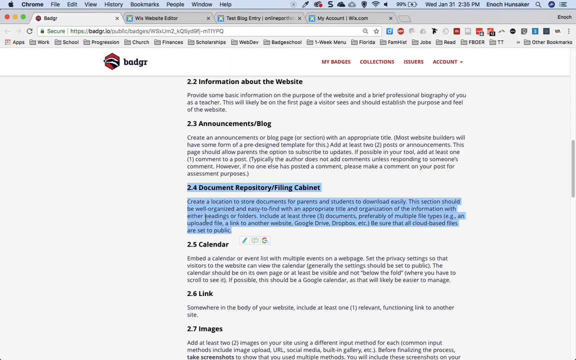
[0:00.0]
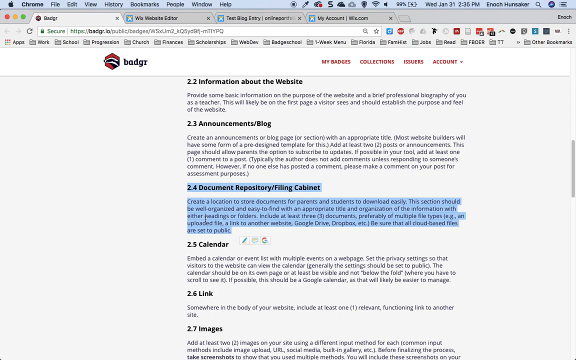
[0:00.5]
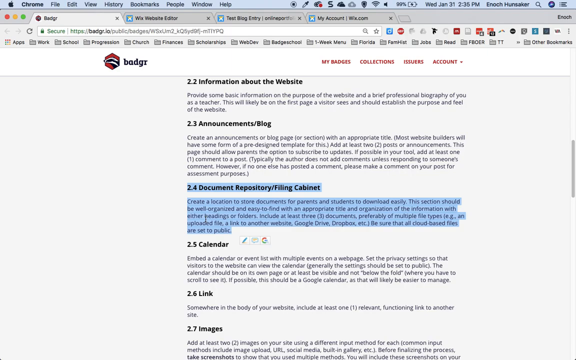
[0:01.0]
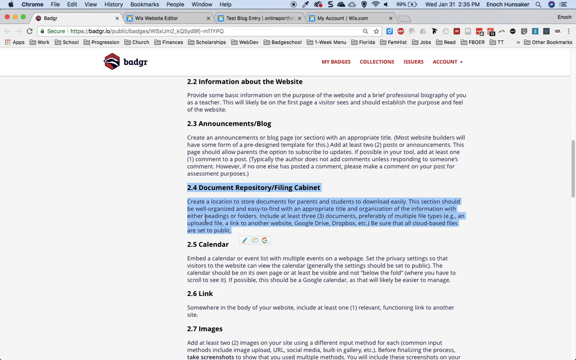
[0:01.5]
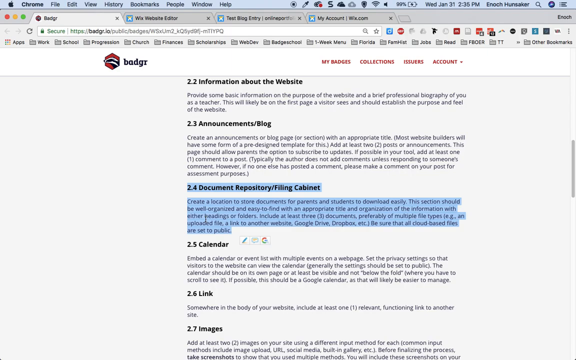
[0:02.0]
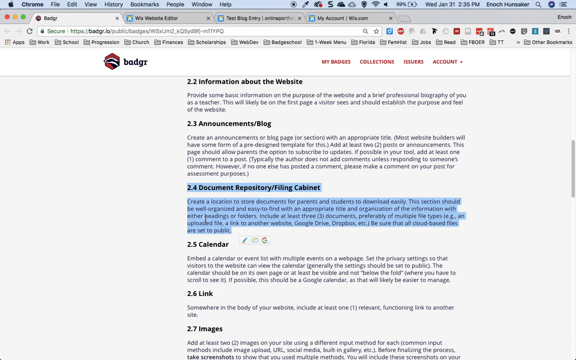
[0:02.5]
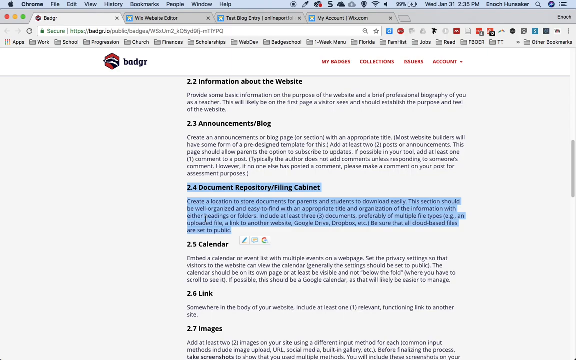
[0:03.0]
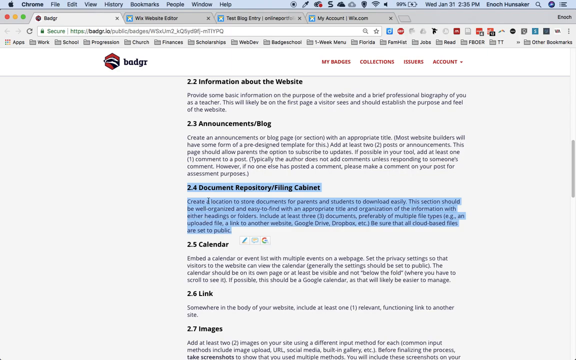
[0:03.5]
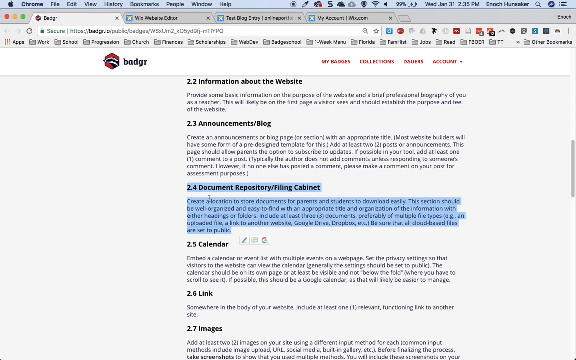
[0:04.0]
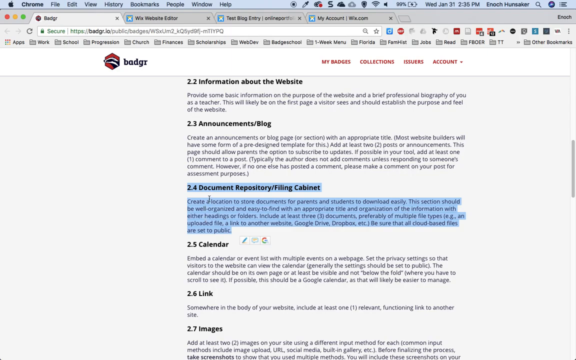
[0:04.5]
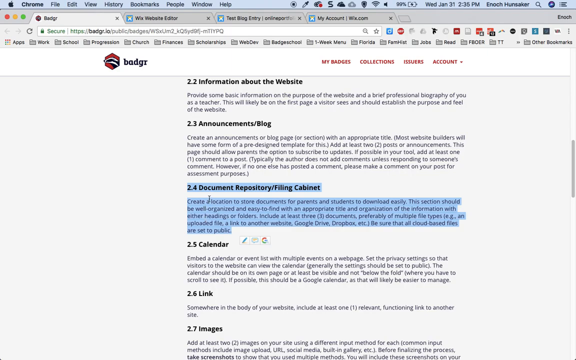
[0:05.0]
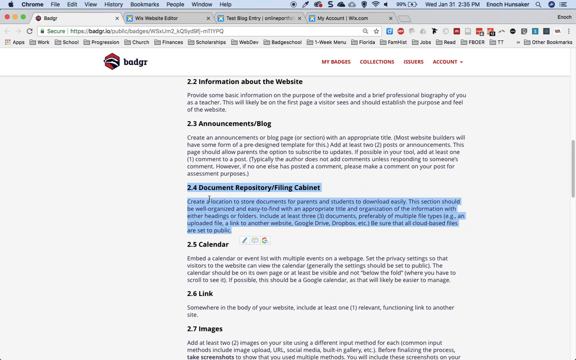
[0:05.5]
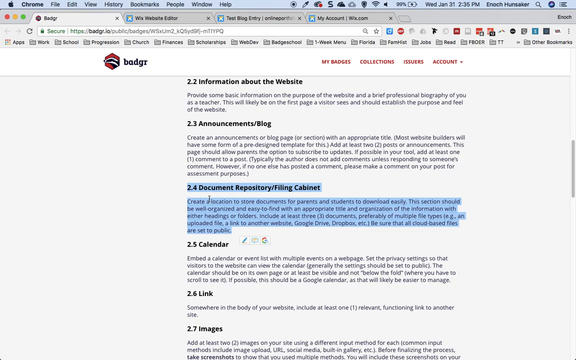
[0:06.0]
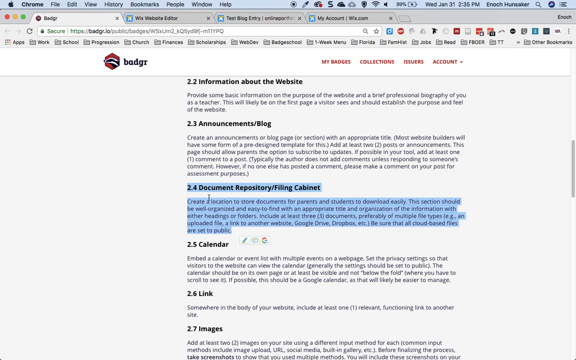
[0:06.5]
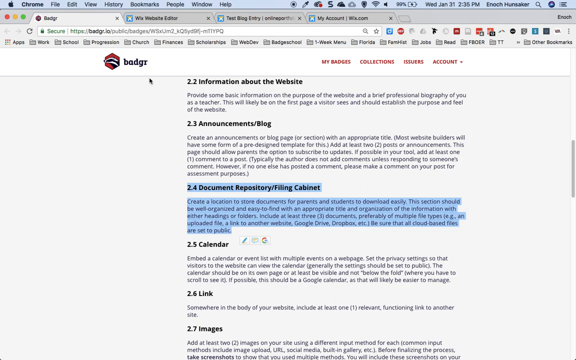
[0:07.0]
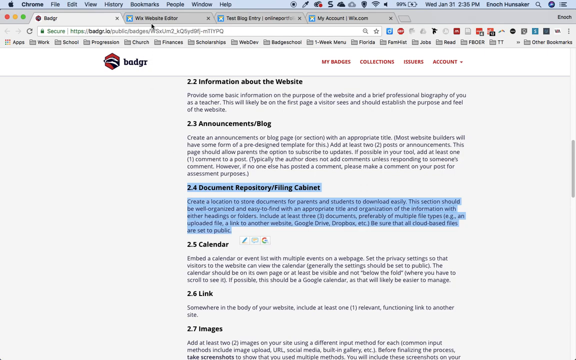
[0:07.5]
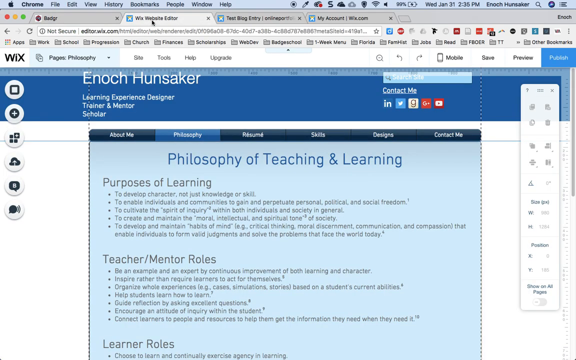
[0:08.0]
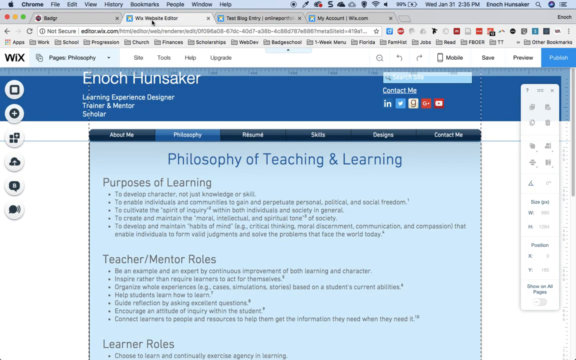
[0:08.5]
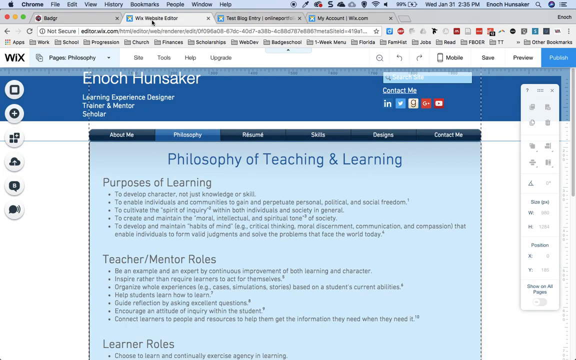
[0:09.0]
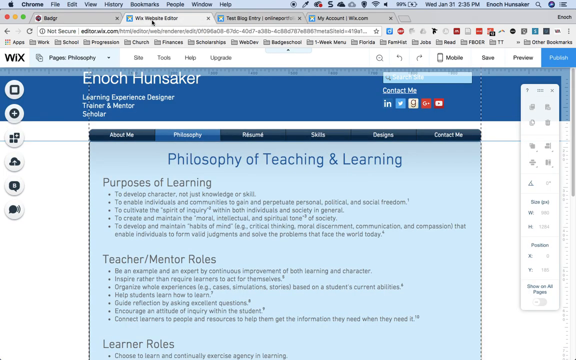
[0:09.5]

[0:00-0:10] A computer screen shows a menu bar with the Apple logo at the top left, followed to the right by Chrome, File, Edit, View, History, Bookmarks, People, Window, and then icons along the top. Below that, four tabs are open, and the first tab is active. At the top left of the tab it says "Badgr". Below this it says "2.2 Information" followed by some writing, then "2.3 Announcement/Blog" with more writing, then "2.4 Document Repository/Filing Cabinet" with more writing; all of this is highlighted in blue. Below that are "2.5 Calendar", "2.6 Link" and "2.7 Images". A mouse cursor moves up to the second tab and clicks on it. This tab says "Enoch Hunsaker", and below that is a philosophy tab. It says "philosophy of teaching and learning", and below that "purposes of learning".